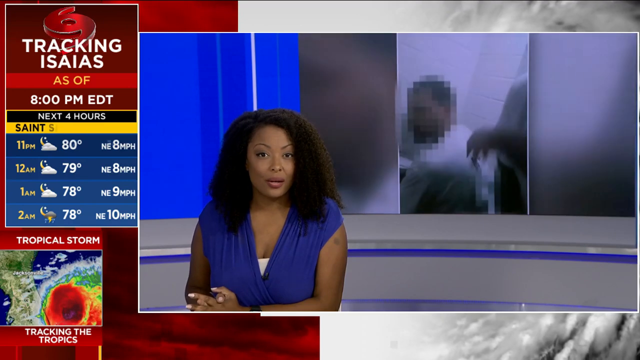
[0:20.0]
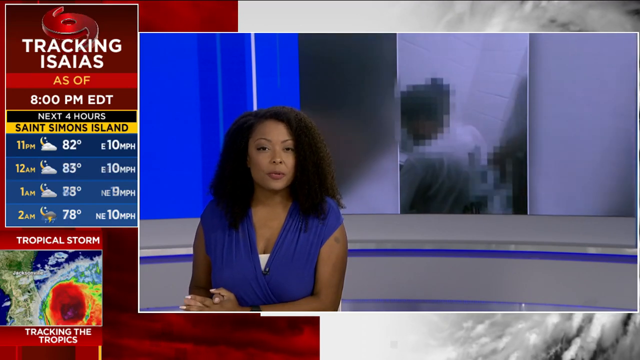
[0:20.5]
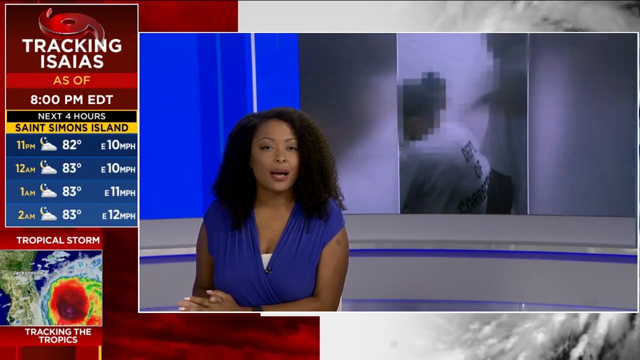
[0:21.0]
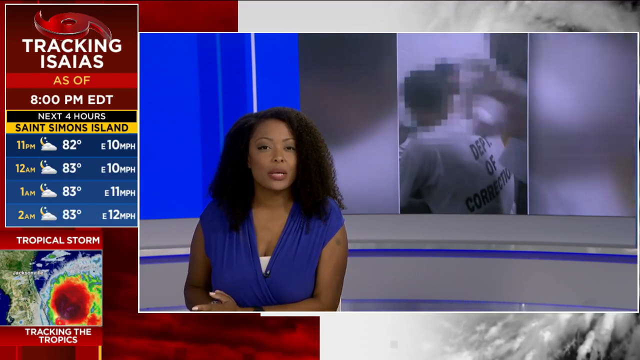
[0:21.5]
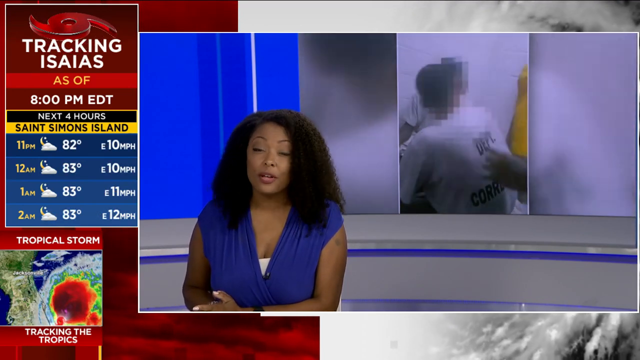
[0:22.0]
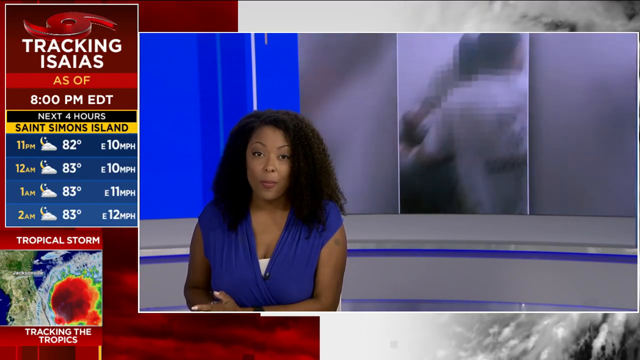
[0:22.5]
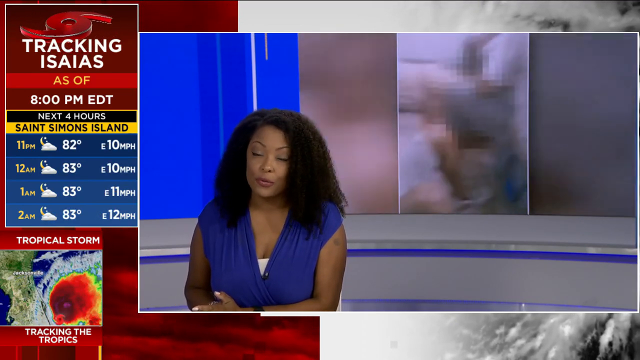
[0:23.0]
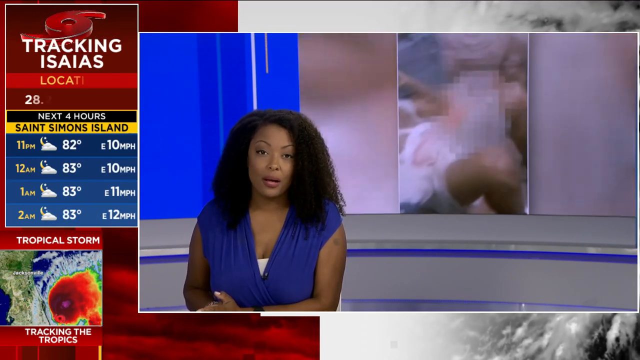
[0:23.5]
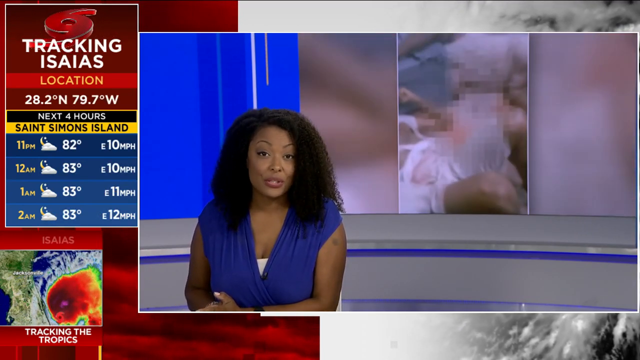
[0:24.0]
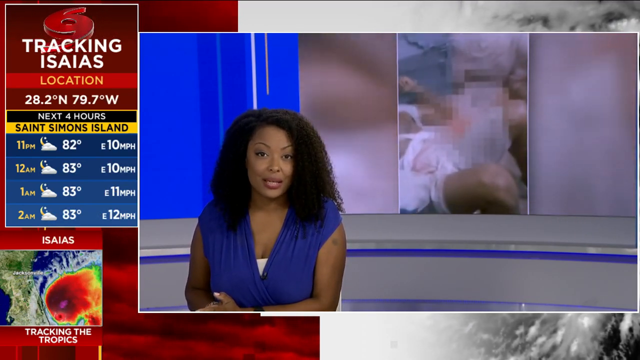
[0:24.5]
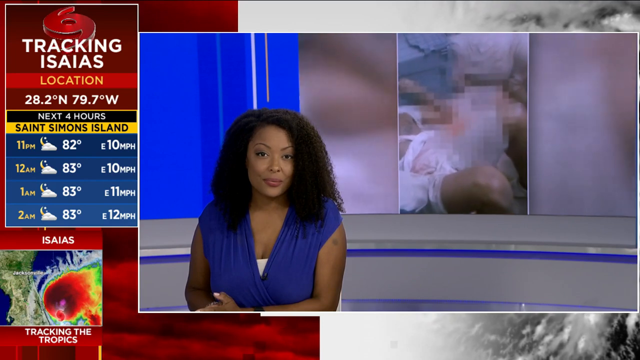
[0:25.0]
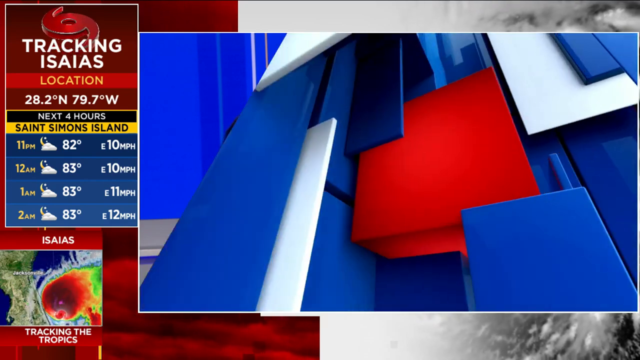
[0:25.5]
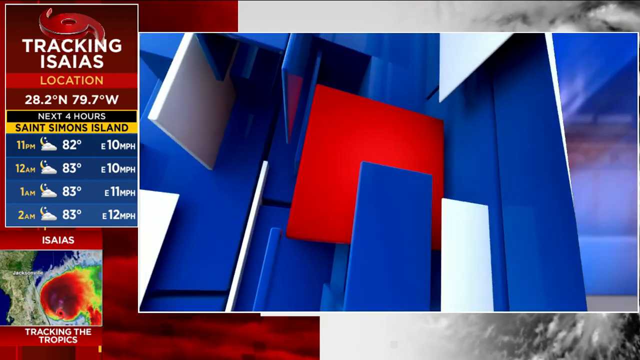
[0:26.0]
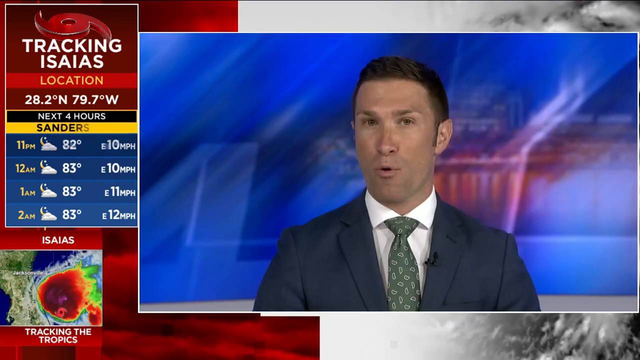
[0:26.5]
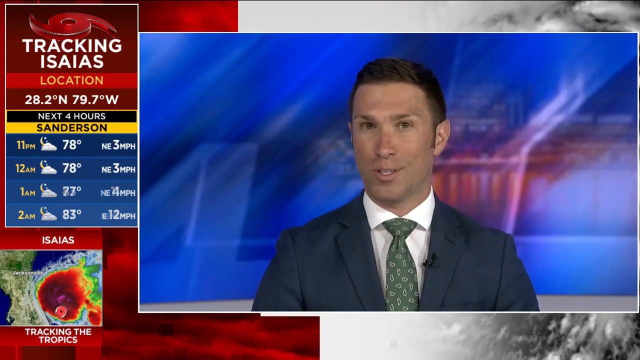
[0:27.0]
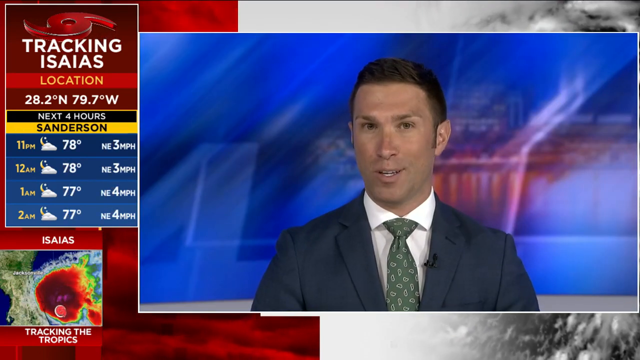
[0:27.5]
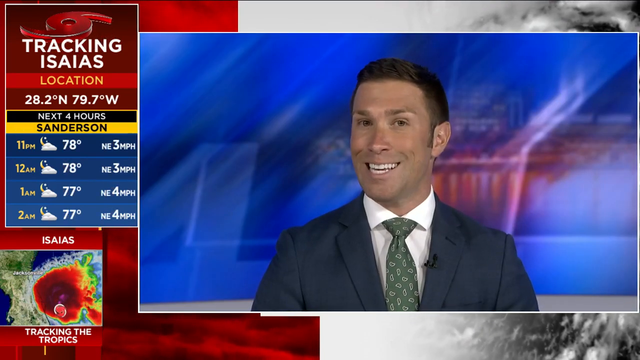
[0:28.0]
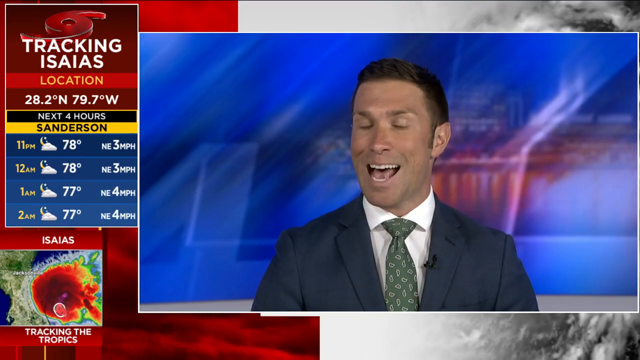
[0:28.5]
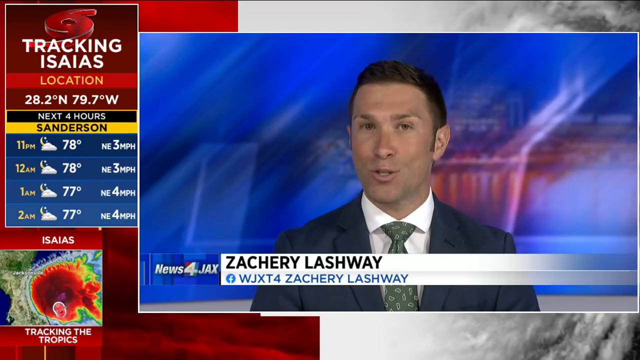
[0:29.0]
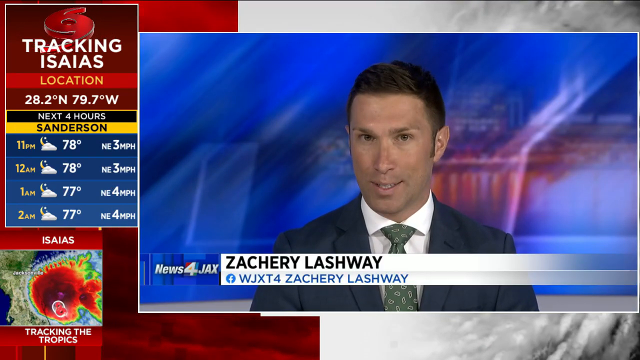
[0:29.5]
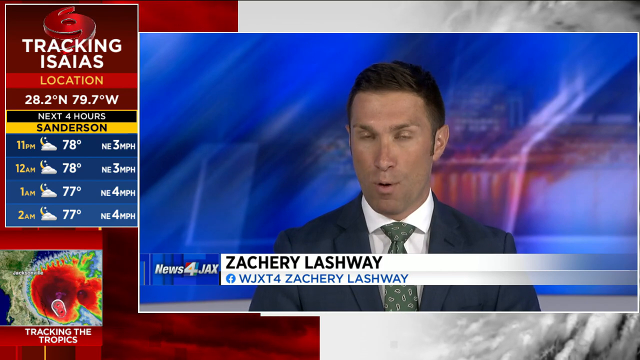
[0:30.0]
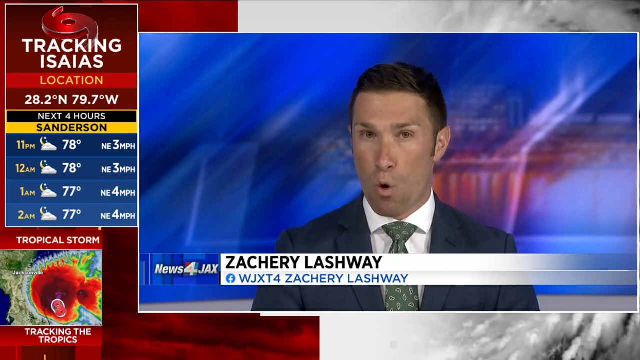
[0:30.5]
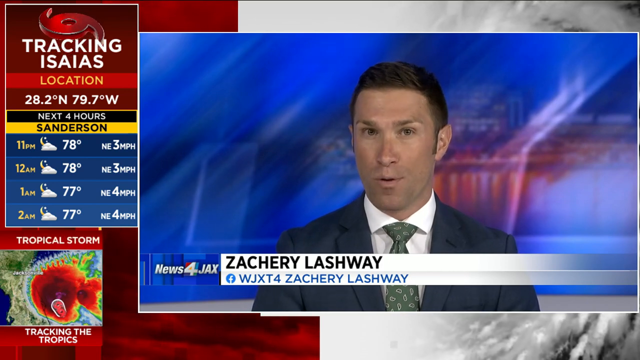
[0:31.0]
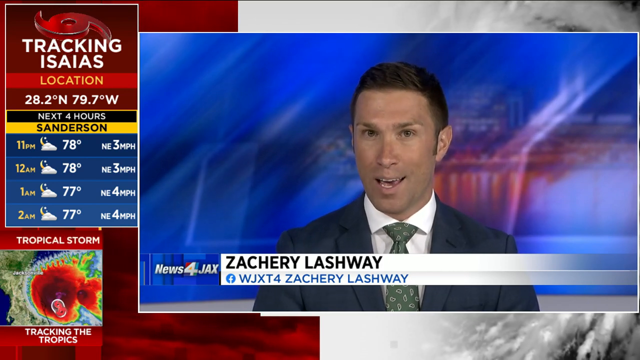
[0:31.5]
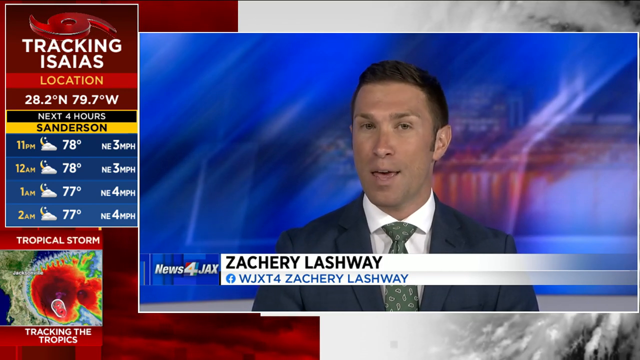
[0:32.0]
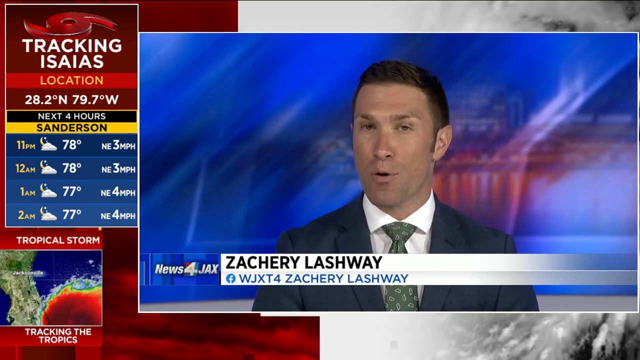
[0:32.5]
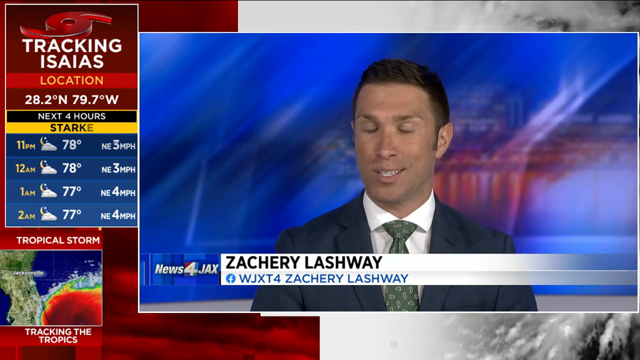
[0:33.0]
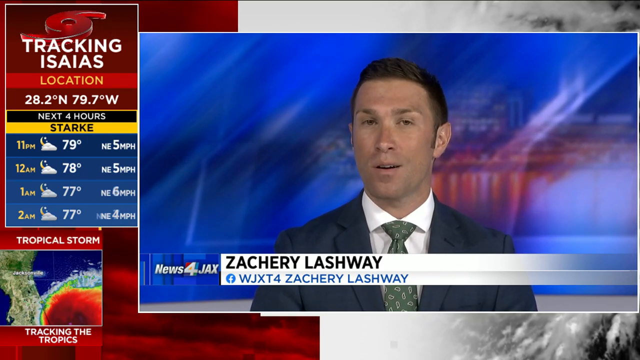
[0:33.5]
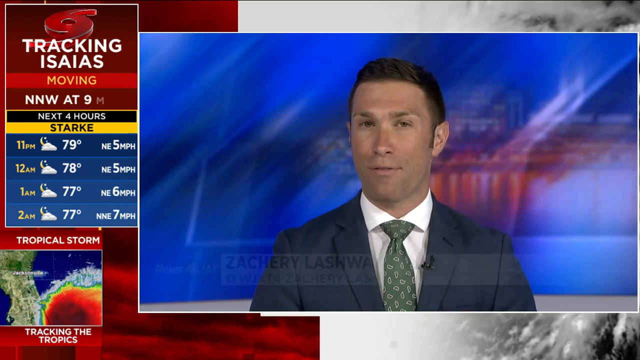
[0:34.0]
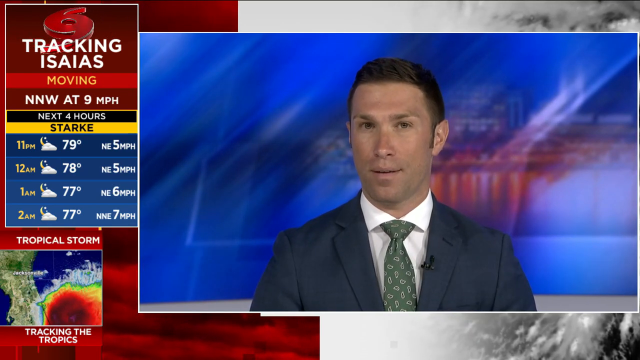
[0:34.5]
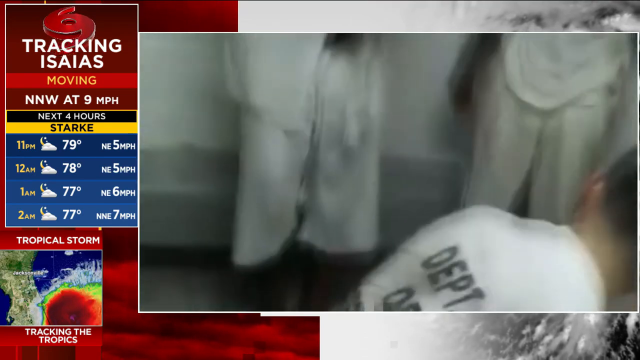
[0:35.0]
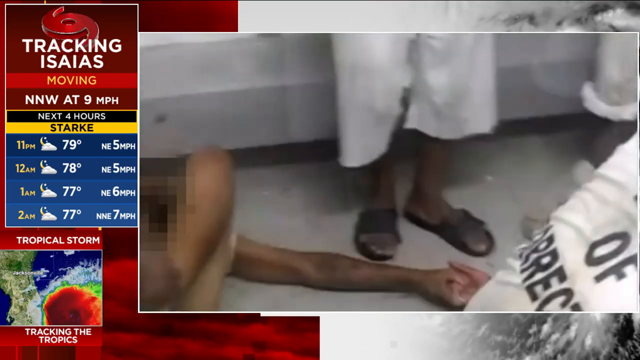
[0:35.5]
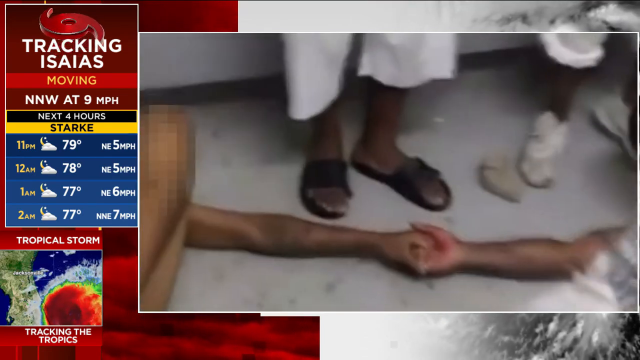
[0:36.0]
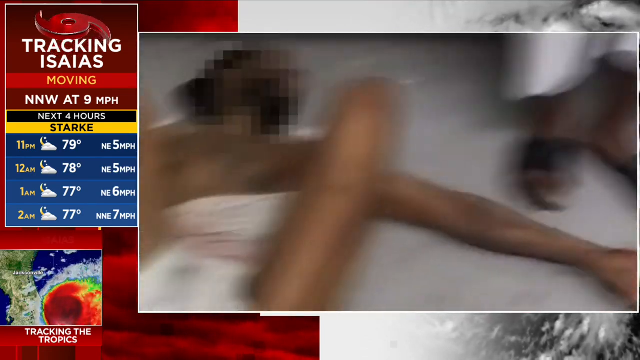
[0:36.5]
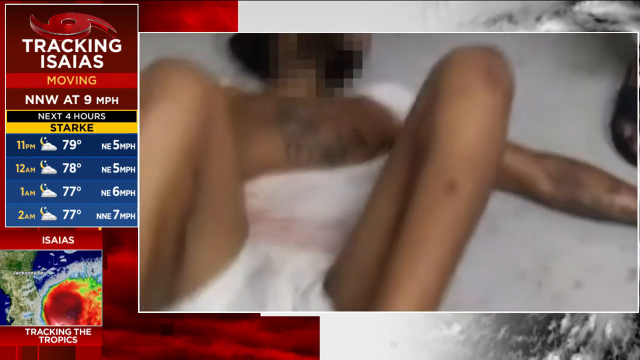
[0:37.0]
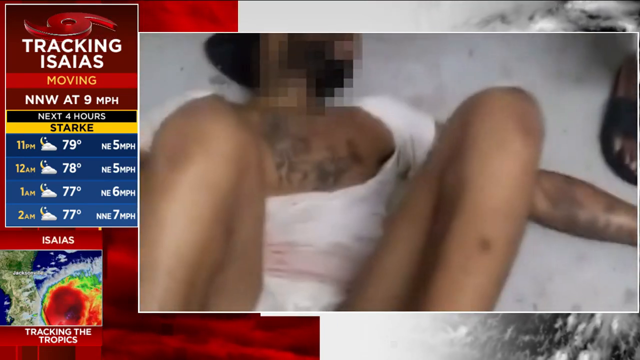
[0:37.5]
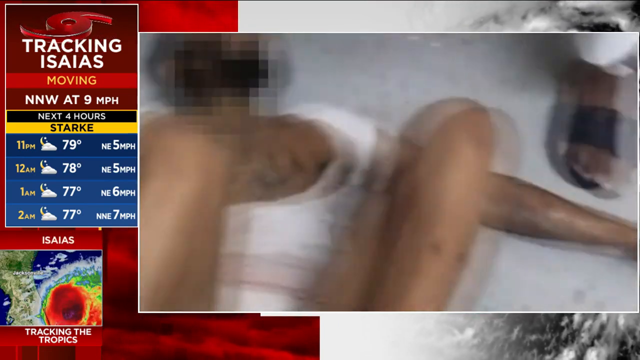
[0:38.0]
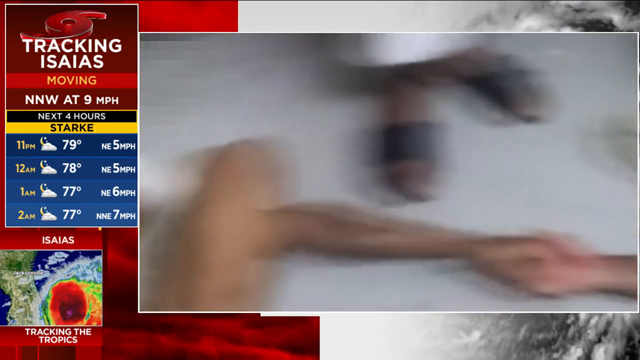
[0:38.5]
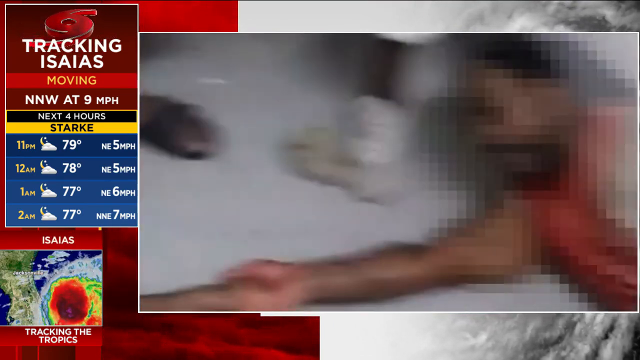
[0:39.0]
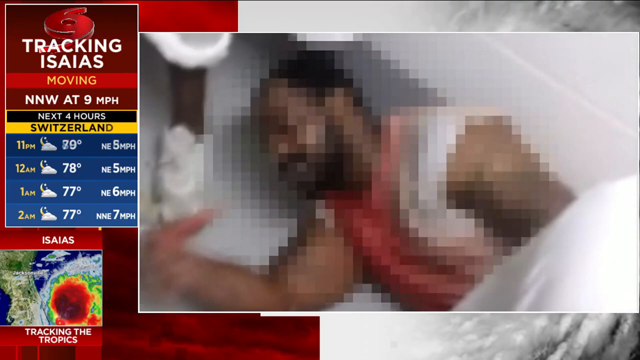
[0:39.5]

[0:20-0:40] The same woman appears: she is Black, with very frizzy, coily hair a little below shoulder length, and wears a blue blouse with a white shirt underneath. Her hands are cupped. On the other side of her is a forecast with letters, and behind her a video plays. In it, a person is on the ground. The video goes to a man in a tie and a blue shirt with white underneath. It shows two men holding hands with a group of men around them; one video has a lot of movement and is kind of blurry. The man talking is an anchor, with "Zachary Lashway" in black lettering behind him. The video cuts to a man with a very hairy chest and another man in either a pink shirt or a bloody shirt lying on the ground holding his hand. He is on one side, talking to the man on the ground; the man talking is shown only for a split second and looks probably about 30. When it cuts back to the men lying down, men in flip-flops and tennis shoes are just standing, their faces not visible at all.